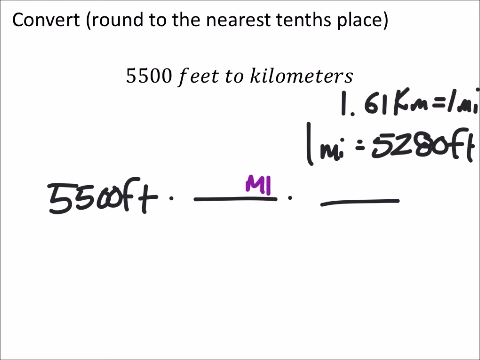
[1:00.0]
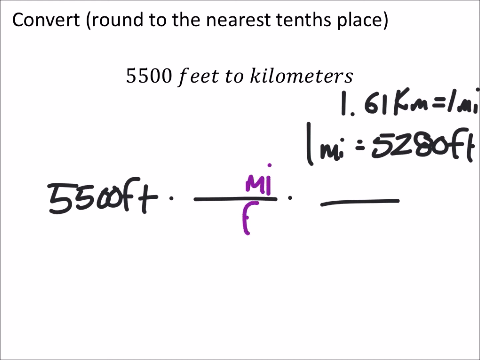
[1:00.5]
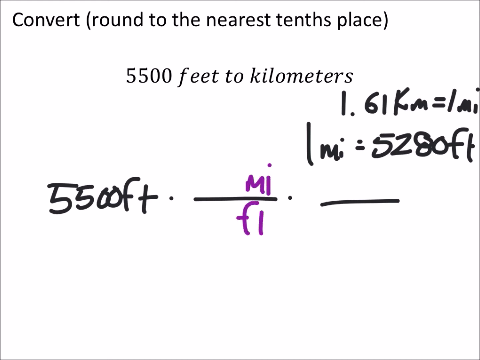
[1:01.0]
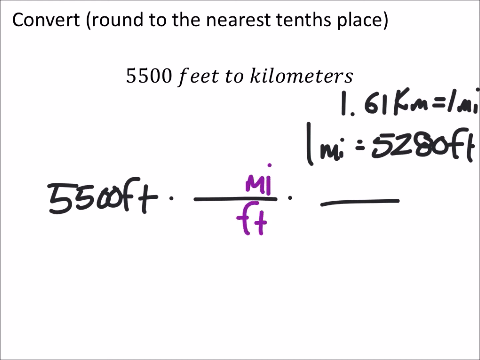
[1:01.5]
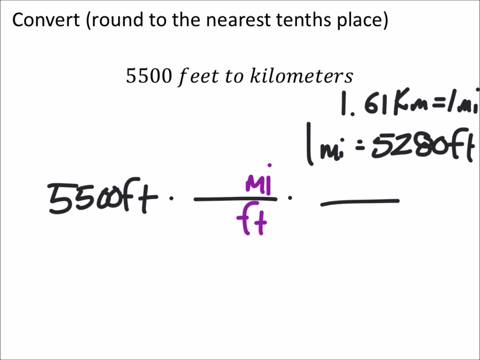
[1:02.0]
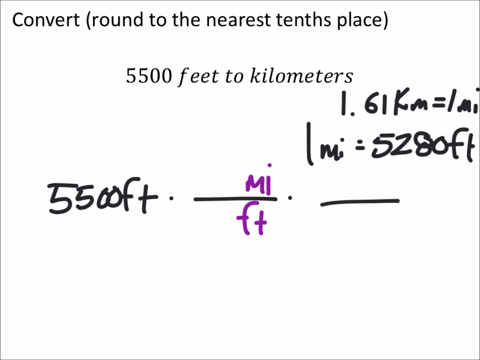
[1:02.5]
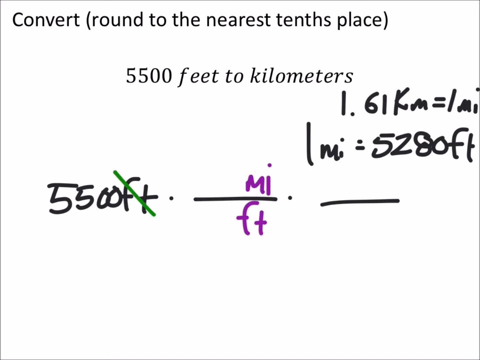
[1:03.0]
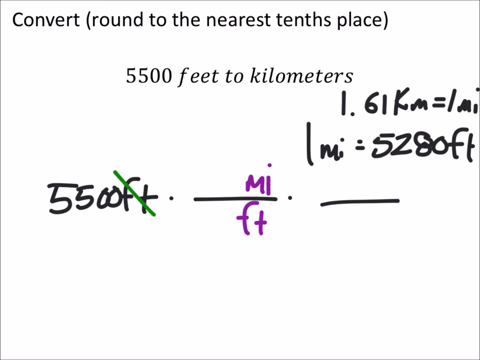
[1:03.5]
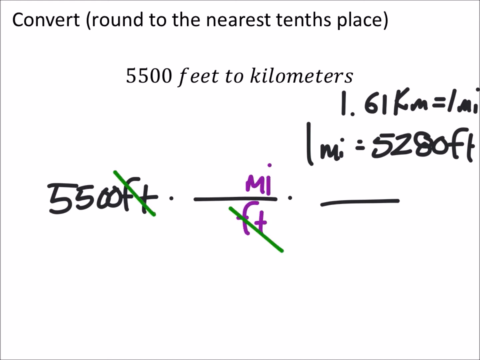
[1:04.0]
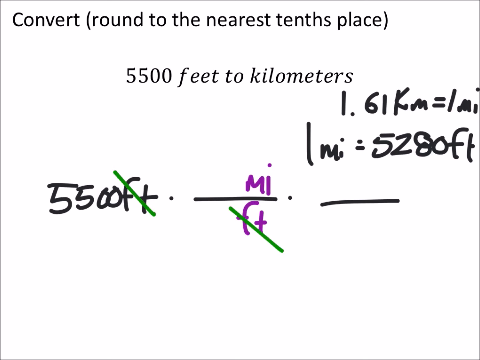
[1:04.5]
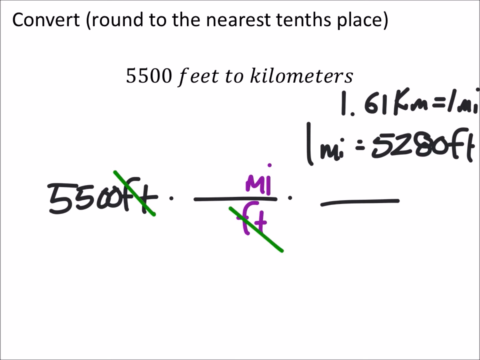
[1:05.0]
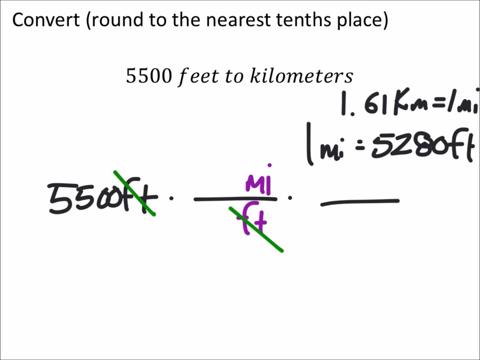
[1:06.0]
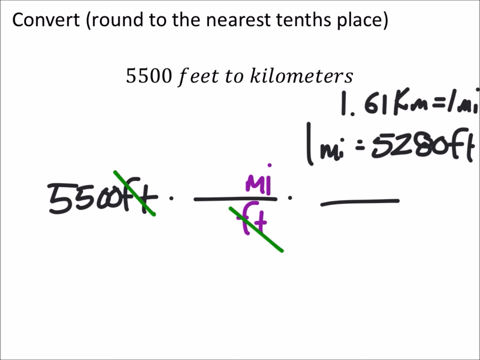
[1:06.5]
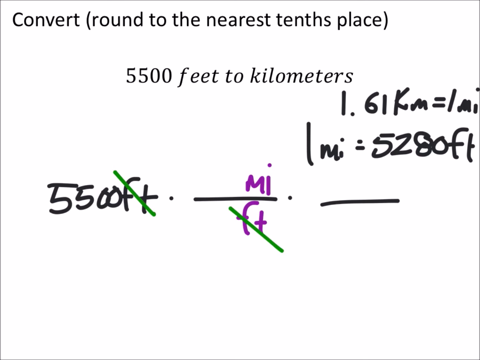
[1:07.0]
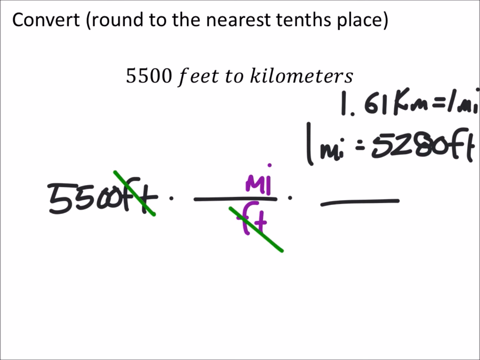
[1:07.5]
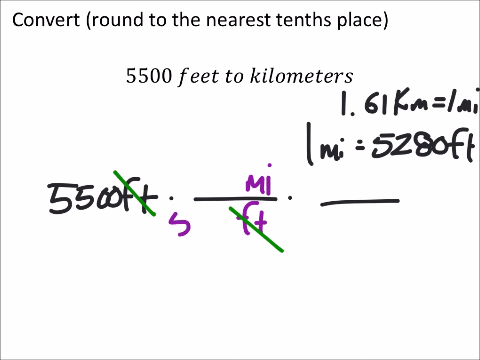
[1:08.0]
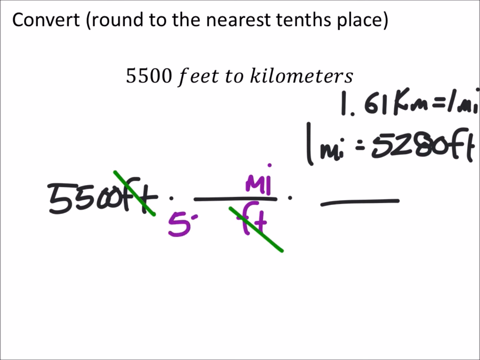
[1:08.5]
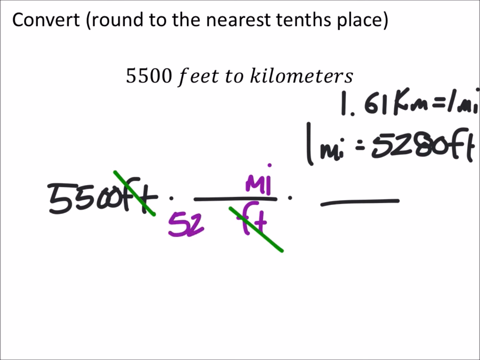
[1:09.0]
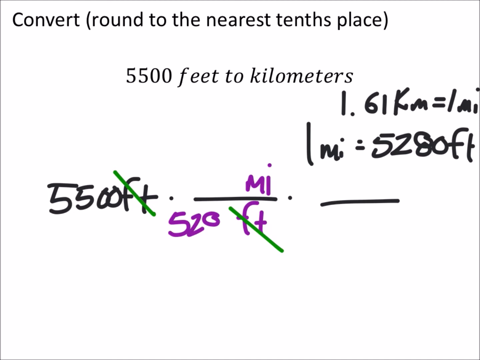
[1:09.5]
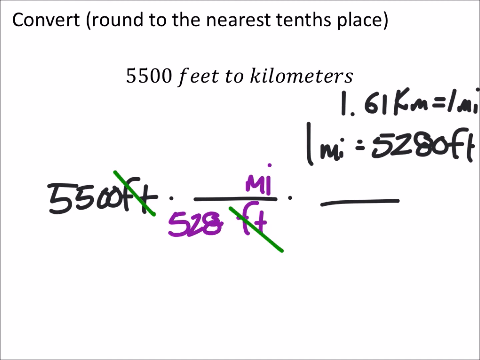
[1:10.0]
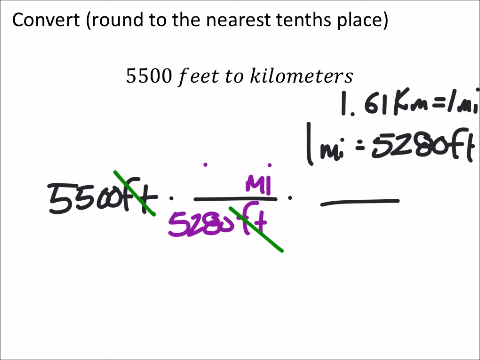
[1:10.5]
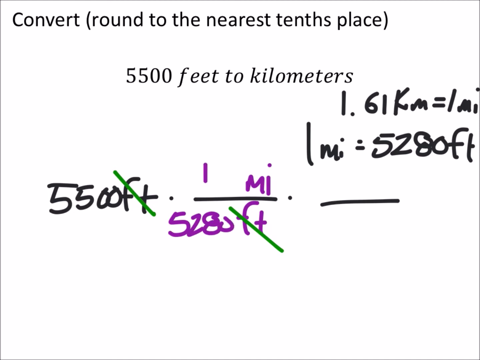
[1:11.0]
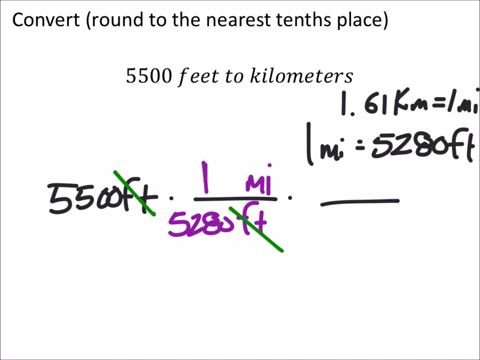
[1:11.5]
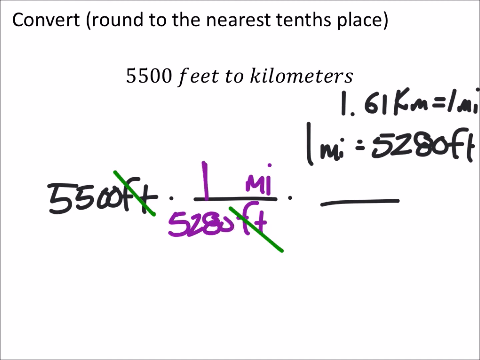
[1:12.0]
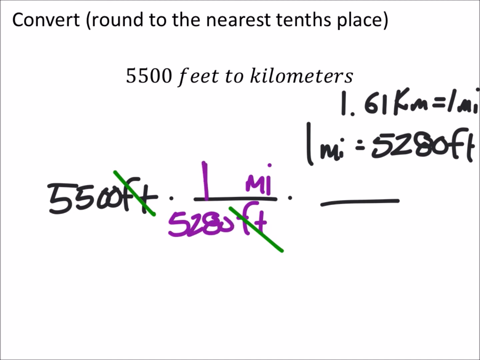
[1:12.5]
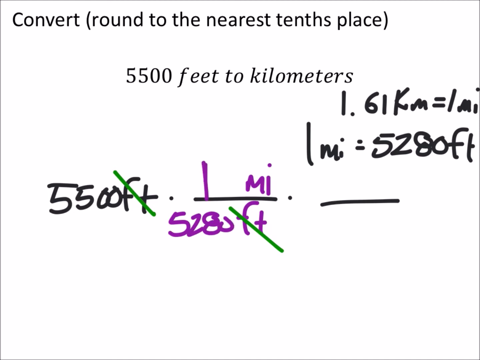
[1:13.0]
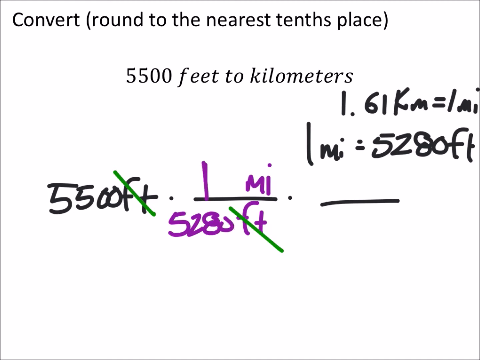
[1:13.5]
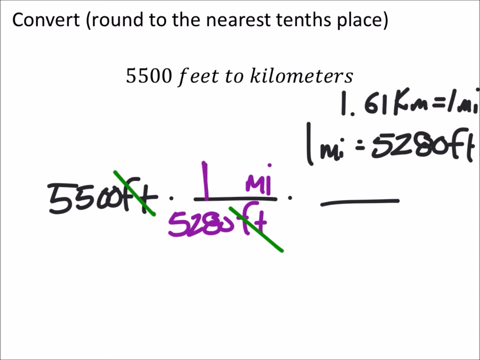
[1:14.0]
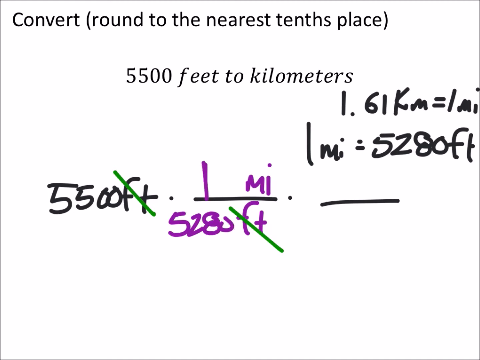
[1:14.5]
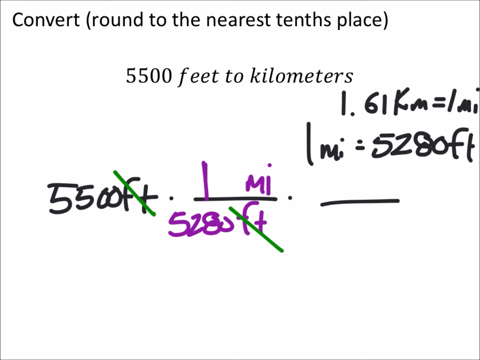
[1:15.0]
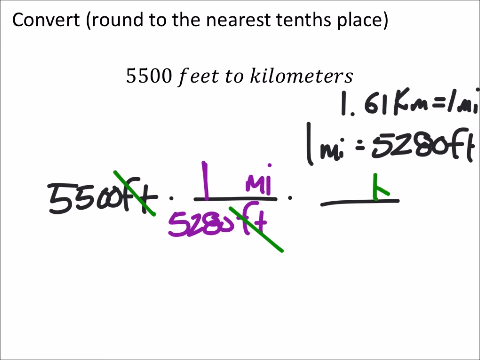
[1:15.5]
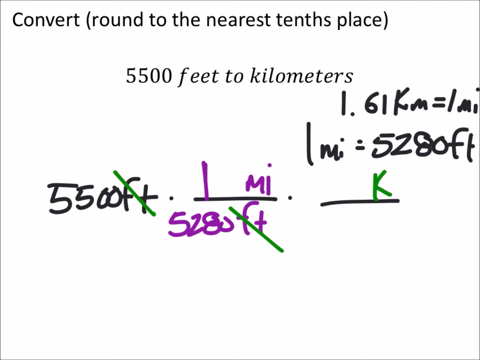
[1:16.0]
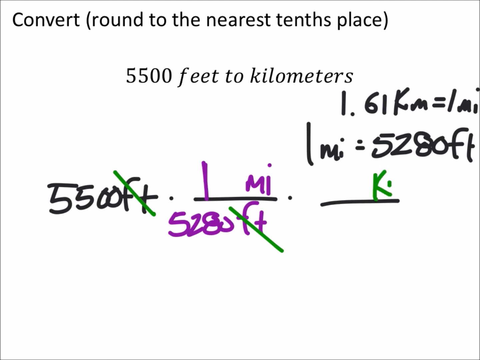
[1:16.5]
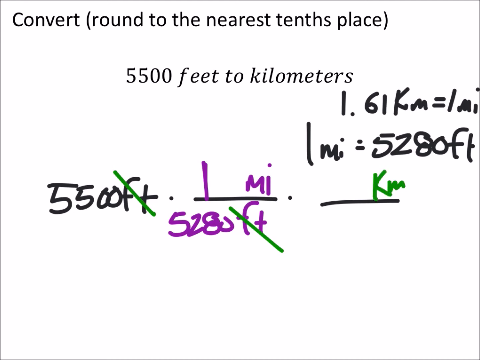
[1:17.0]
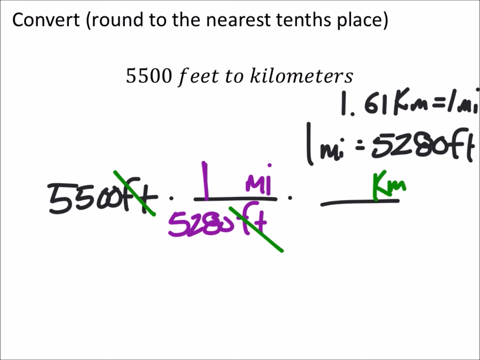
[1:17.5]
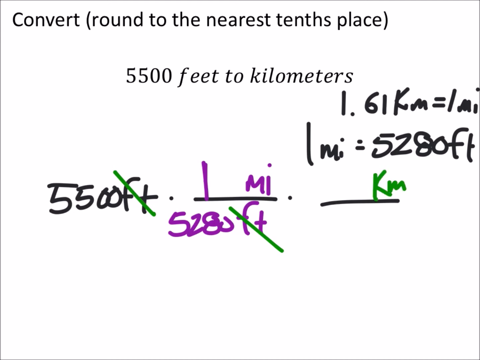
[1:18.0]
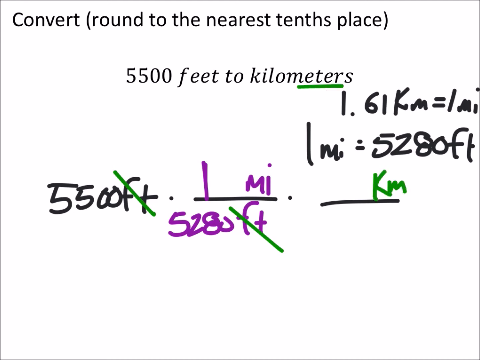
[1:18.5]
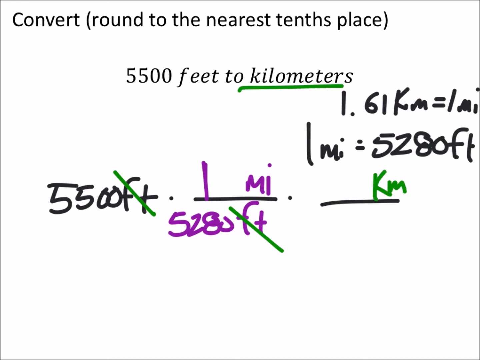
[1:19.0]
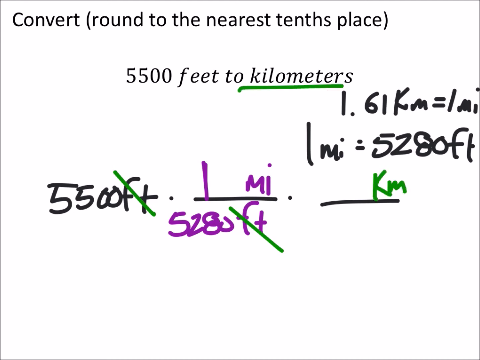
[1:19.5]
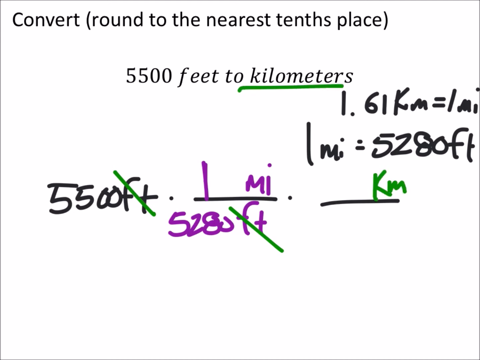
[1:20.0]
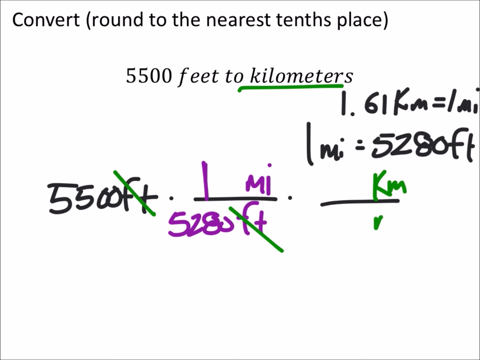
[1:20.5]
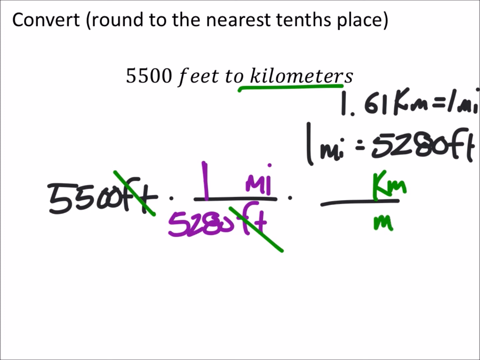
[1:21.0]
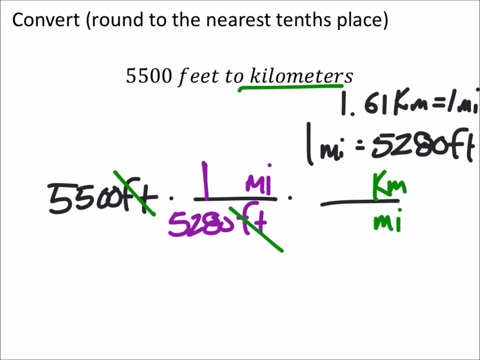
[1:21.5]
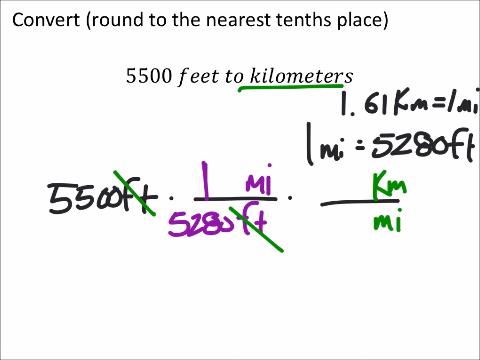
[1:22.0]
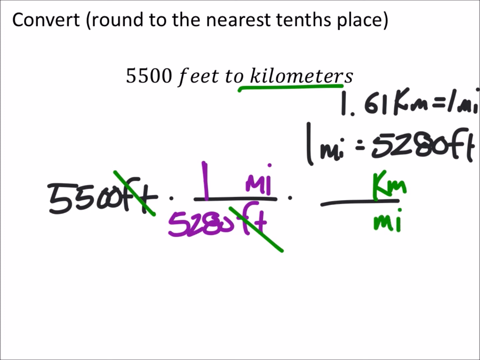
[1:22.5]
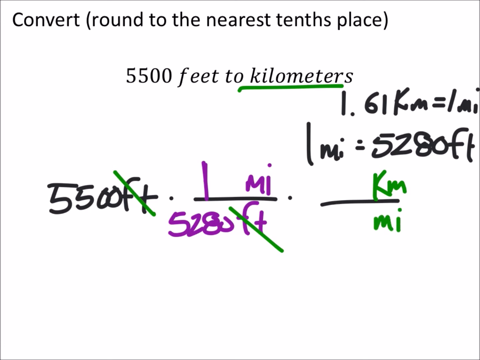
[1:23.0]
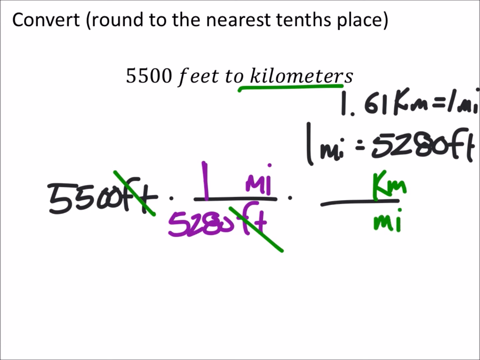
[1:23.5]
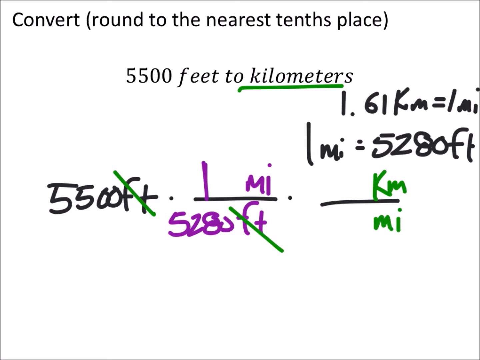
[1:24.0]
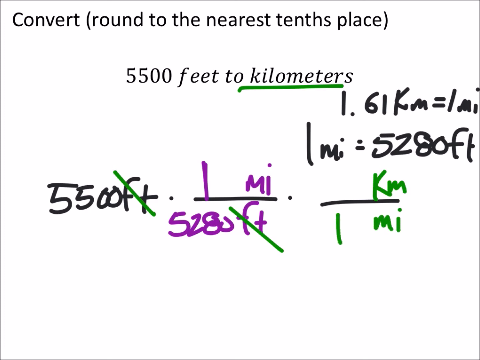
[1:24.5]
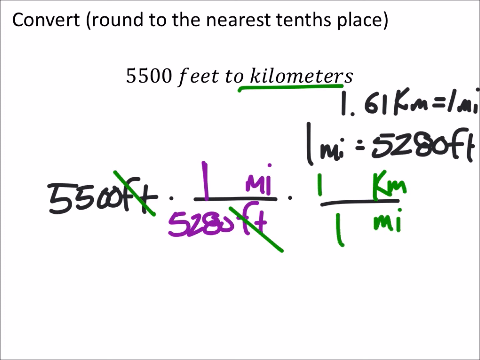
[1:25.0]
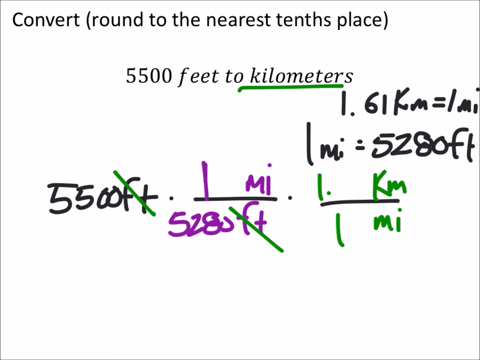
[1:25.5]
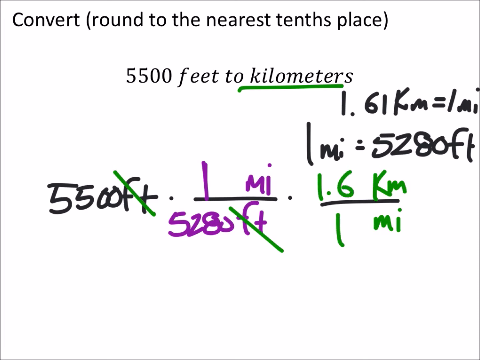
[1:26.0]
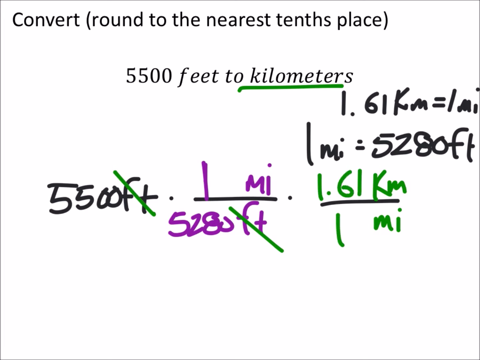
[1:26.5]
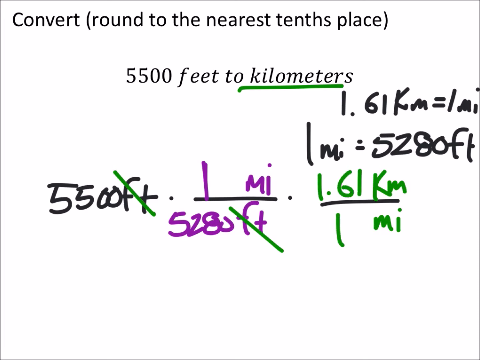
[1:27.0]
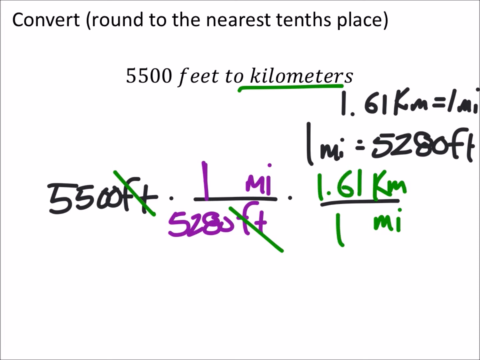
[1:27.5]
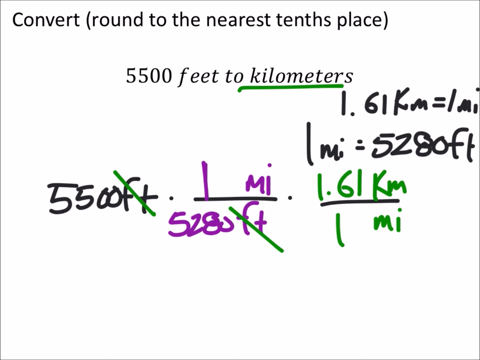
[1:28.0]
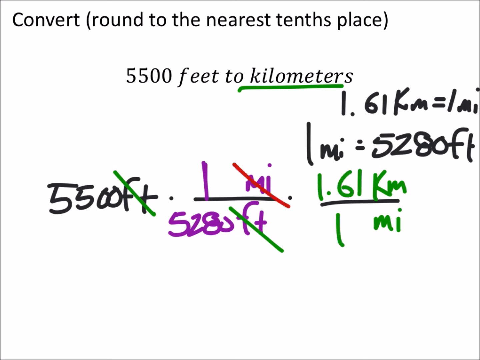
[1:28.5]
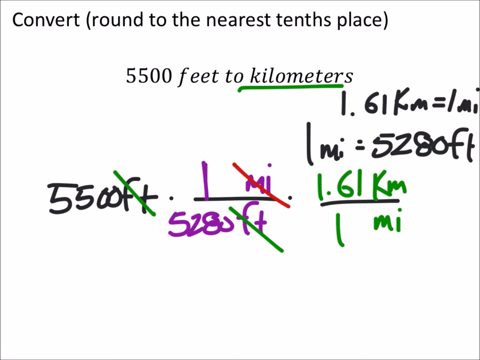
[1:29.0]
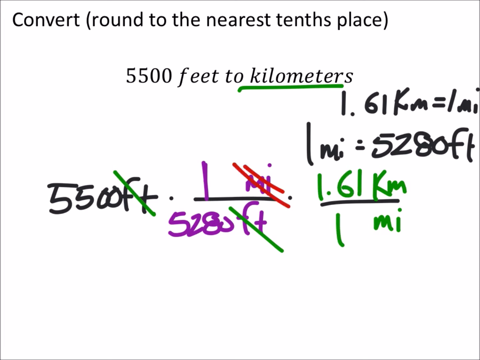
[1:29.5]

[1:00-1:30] The conversion of feet to kilometers continues. The formula states that 1.61 kilometers is 1 millimeter, with 1 millimeter divided by a number of feet. A value of 550 feet appears, and a conversion apparently relates 5,500 feet to 5,280.